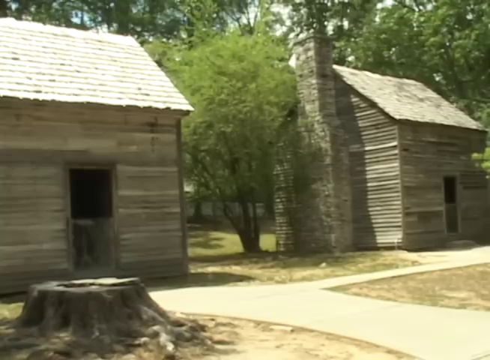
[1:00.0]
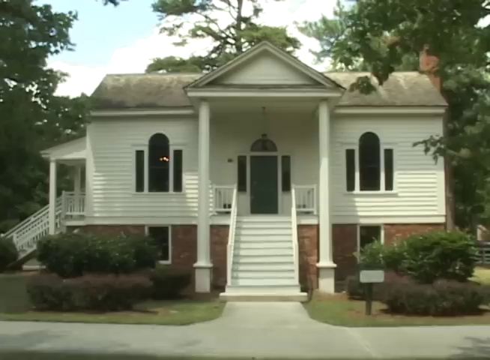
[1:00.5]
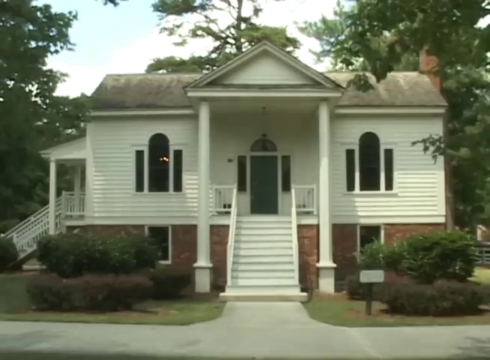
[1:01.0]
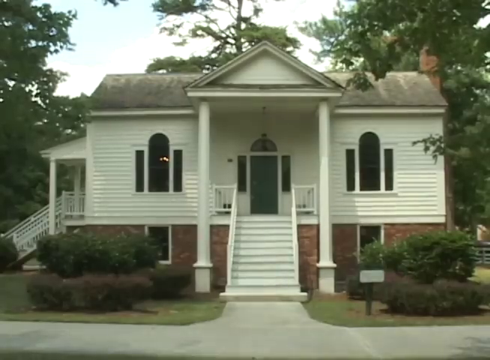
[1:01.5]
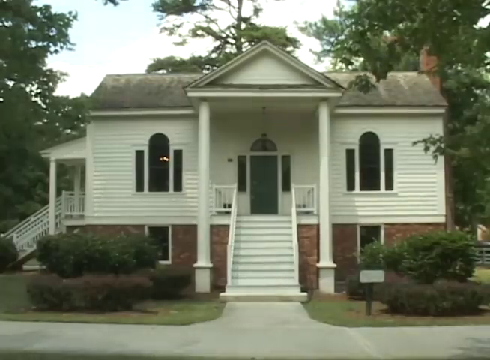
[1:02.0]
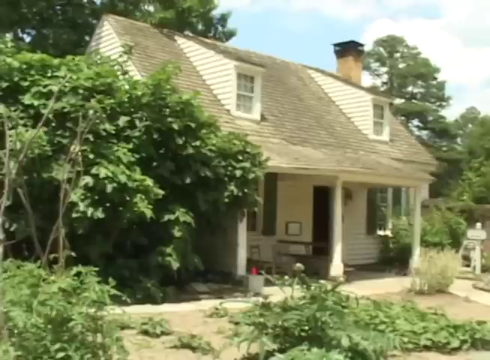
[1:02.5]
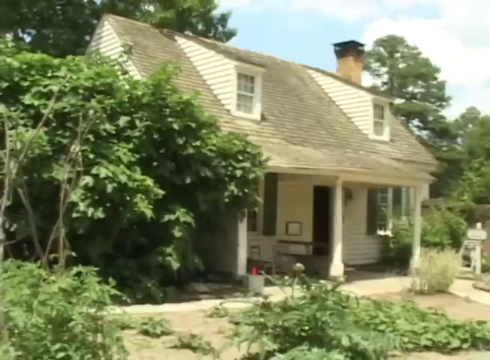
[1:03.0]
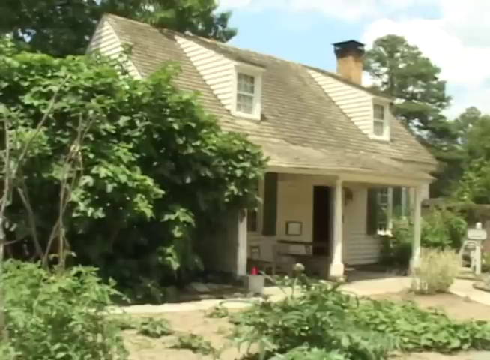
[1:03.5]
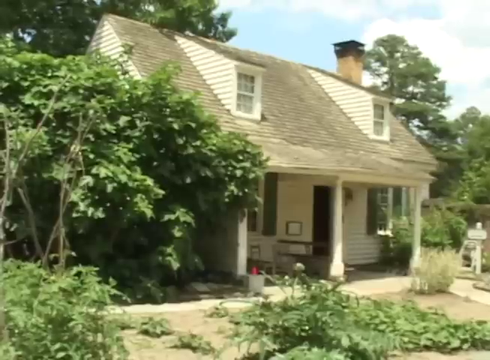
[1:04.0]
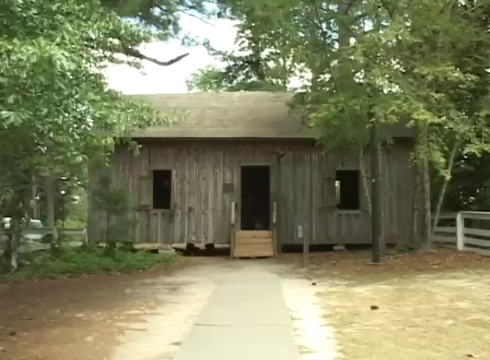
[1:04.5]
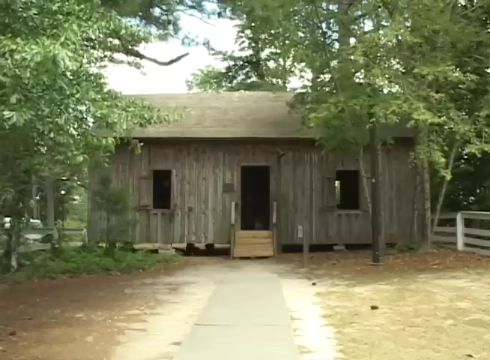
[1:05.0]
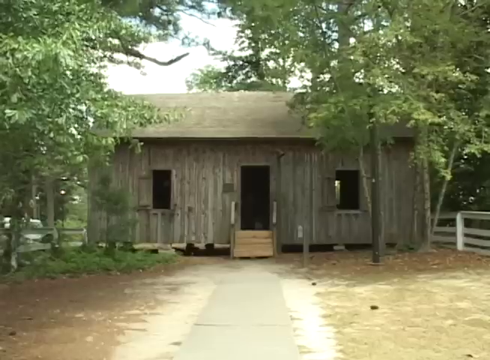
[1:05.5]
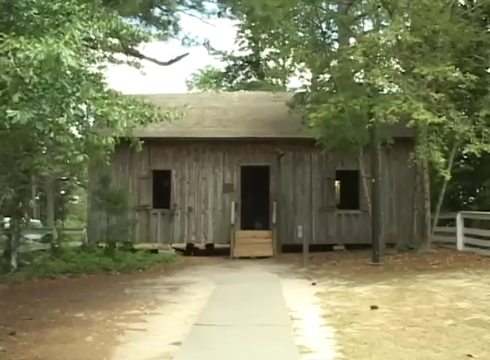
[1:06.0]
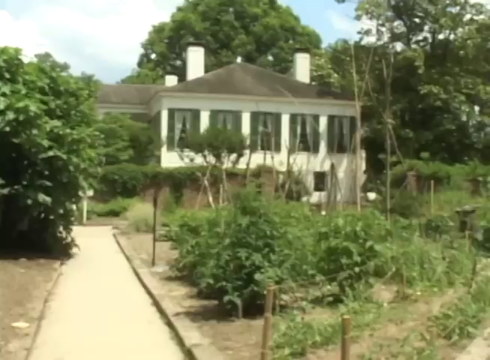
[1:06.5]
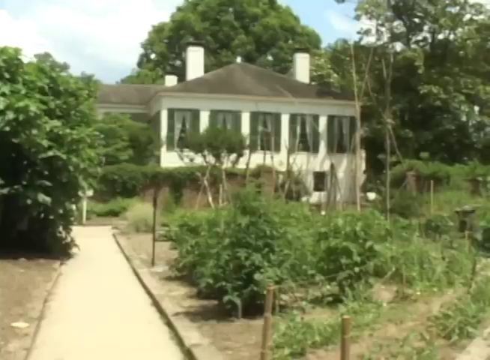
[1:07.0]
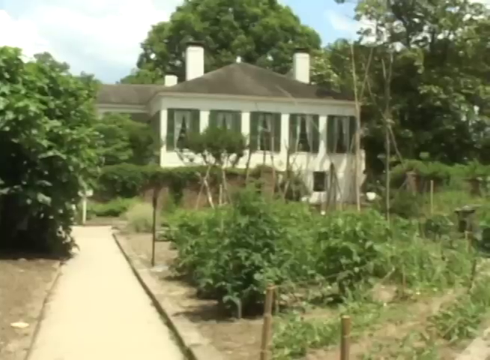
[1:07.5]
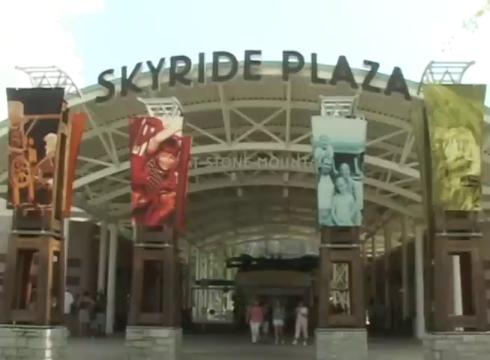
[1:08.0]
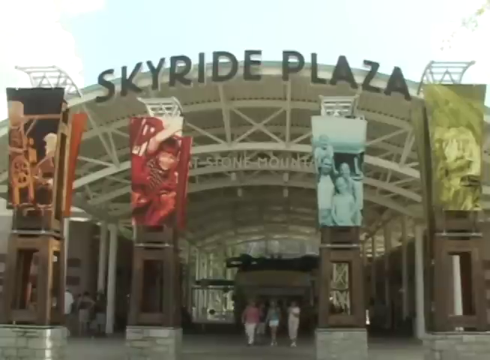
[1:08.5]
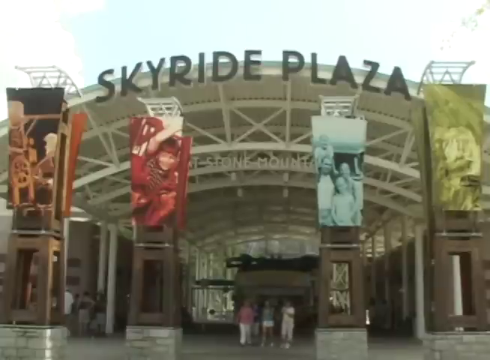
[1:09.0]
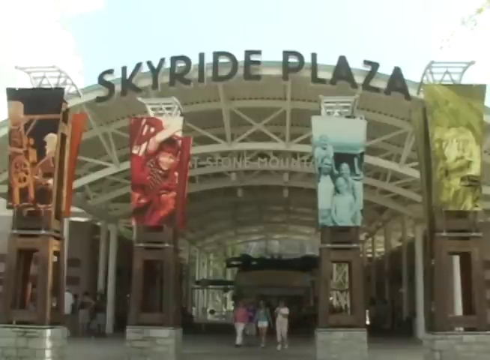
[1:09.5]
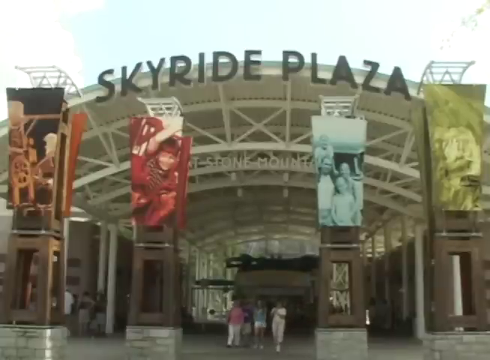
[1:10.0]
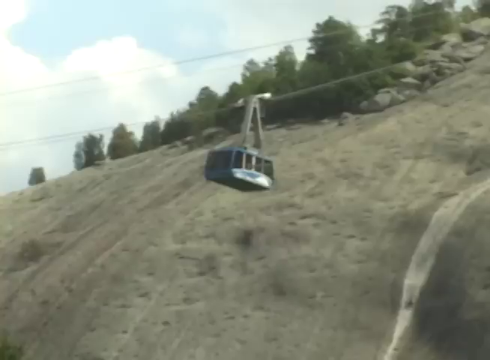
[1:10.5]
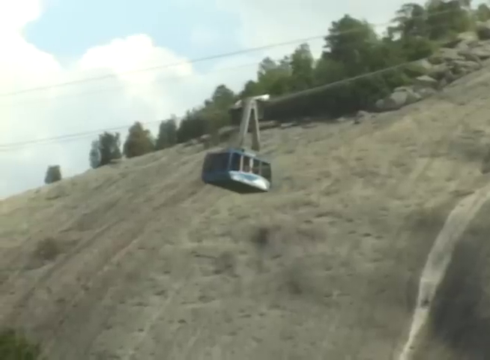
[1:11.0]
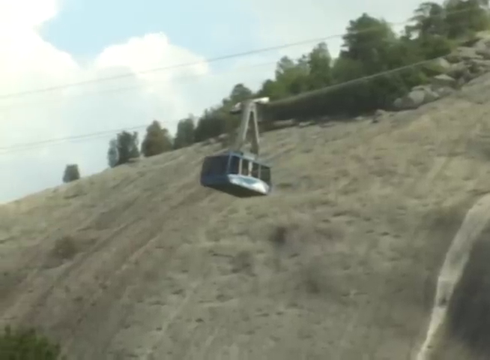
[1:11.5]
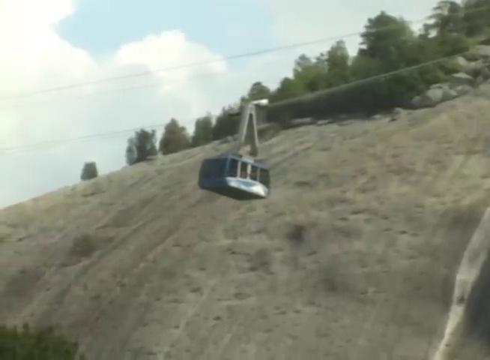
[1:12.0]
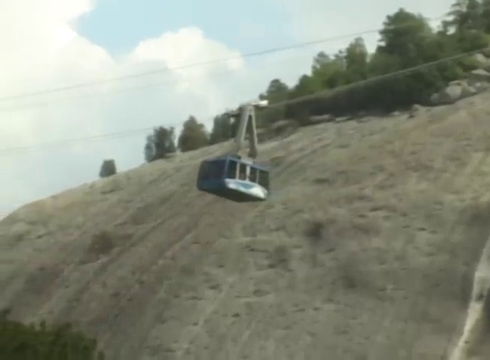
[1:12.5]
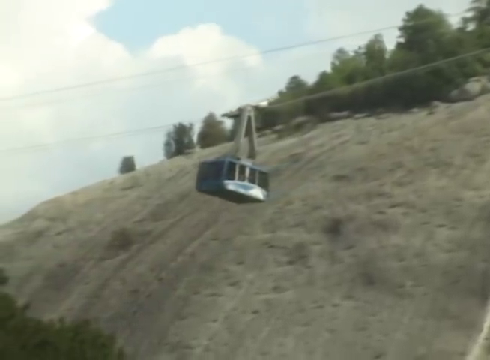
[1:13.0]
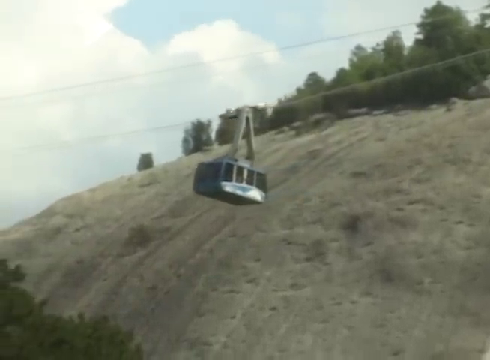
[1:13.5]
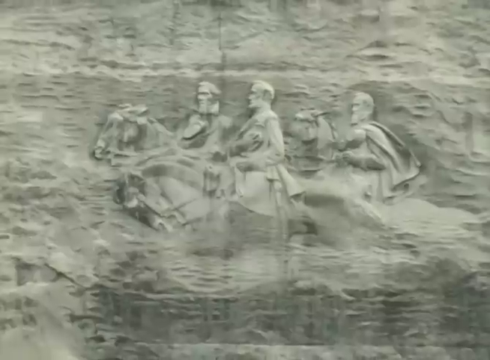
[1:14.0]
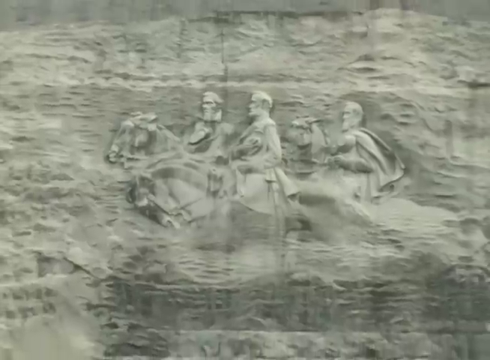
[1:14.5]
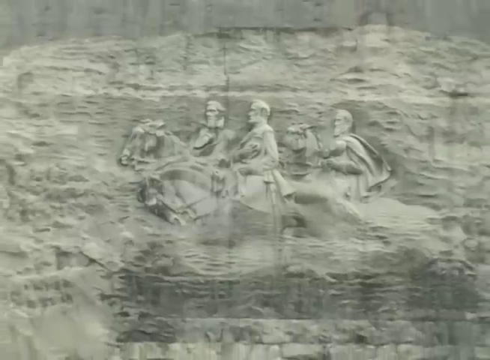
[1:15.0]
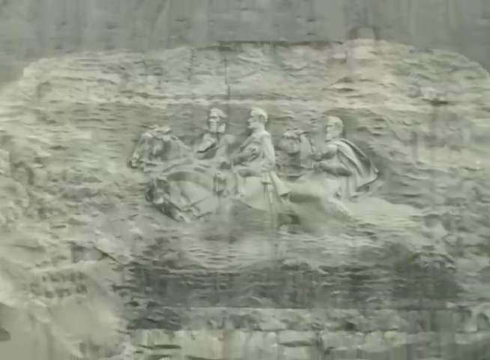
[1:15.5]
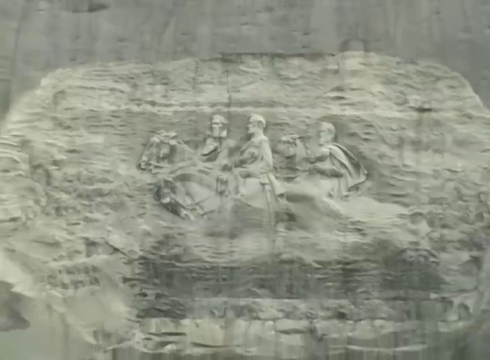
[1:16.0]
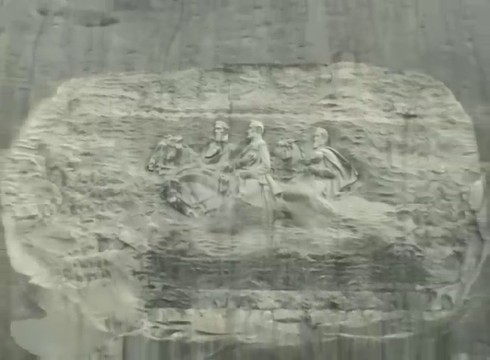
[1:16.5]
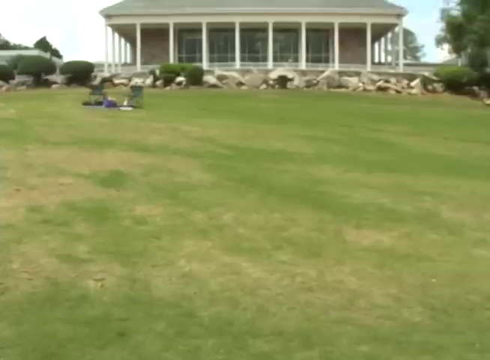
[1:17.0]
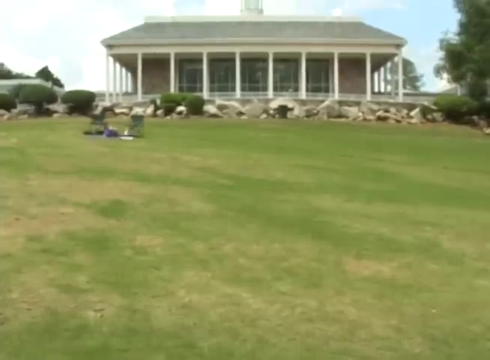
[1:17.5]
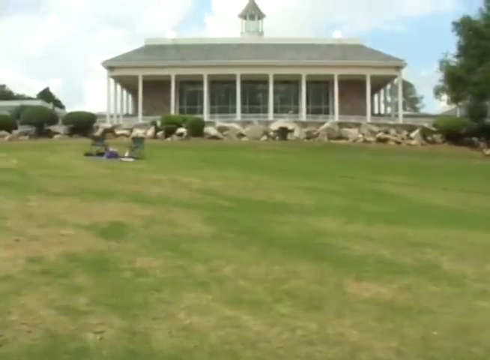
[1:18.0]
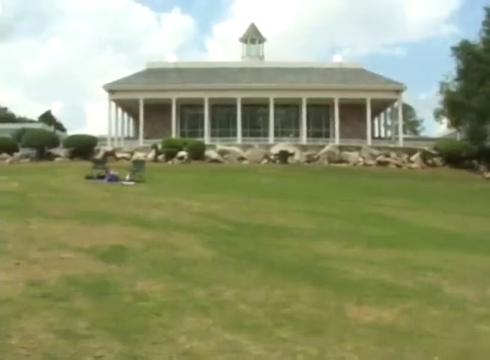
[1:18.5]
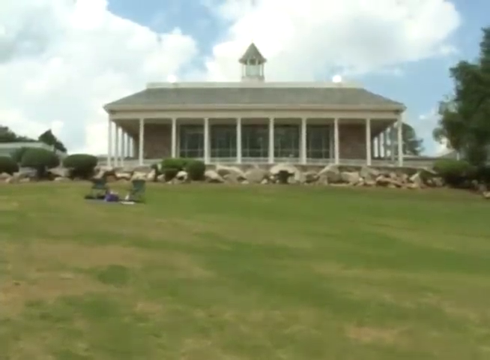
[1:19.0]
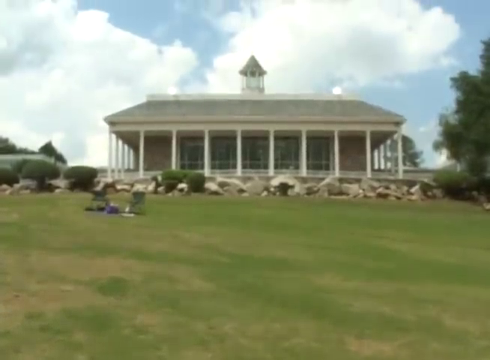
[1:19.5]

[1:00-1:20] In the farmyard there is a stump that used to be a tree, with many trees in the back. Little shed-like farm buildings in a very old-fashioned 1800s style have chimneys, with trees in the background, sidewalks, and a sunny day. Next is the front of a different house with two pillars, a stairway in the center, a walkway, chimneys, trees, and stairs on the two visible sides. It has red brick underneath and white painted siding above, with round windows and two vertical rectangular windows. Then either the same house from the back or another house with two pillars appears, with two upstairs bedrooms, a chimney and a bunch of trees. An old-fashioned barn, almost like a horse stable, is unpainted gray old-looking wood with some stairs and a sidewalk going to it, surrounded by a bunch of trees, under a slightly cloudy sky, with a white fence on one side. Another outside view shows a large house with two or three chimneys and a bunch of trees.